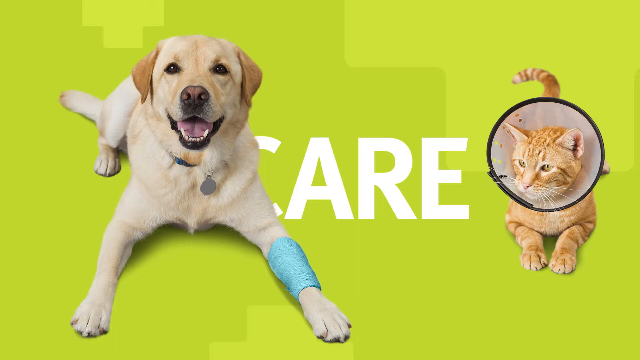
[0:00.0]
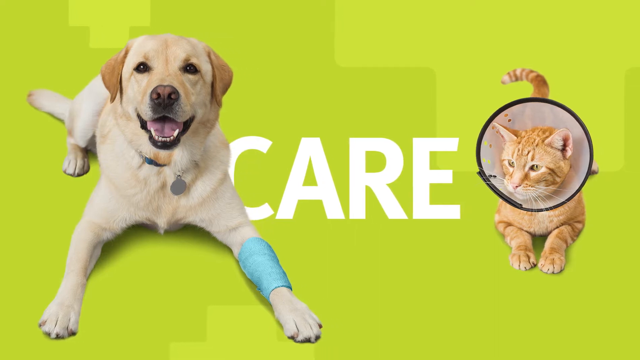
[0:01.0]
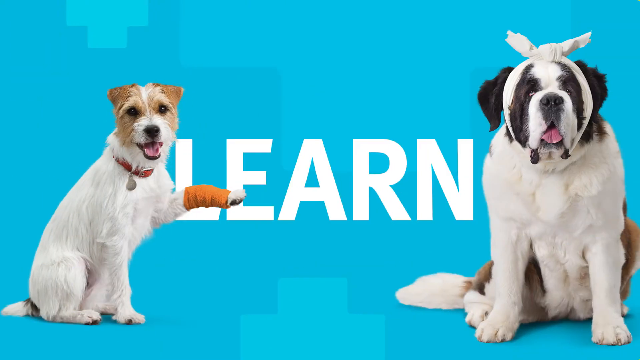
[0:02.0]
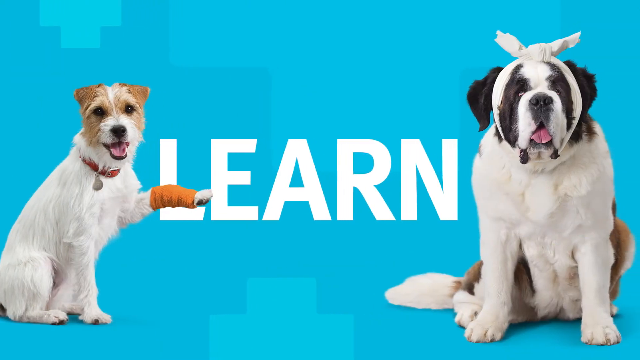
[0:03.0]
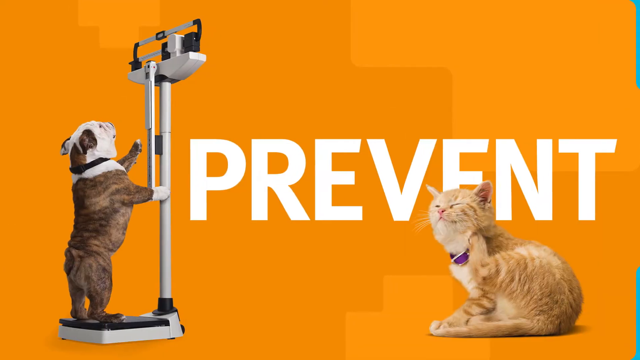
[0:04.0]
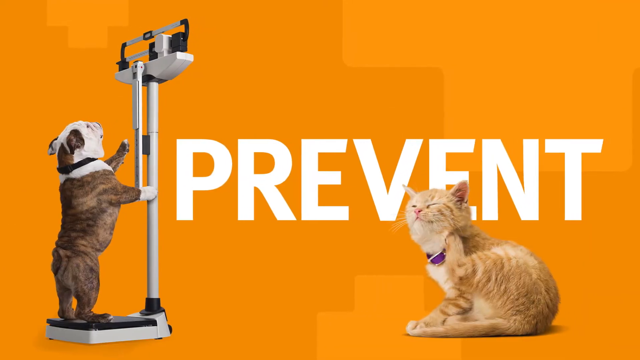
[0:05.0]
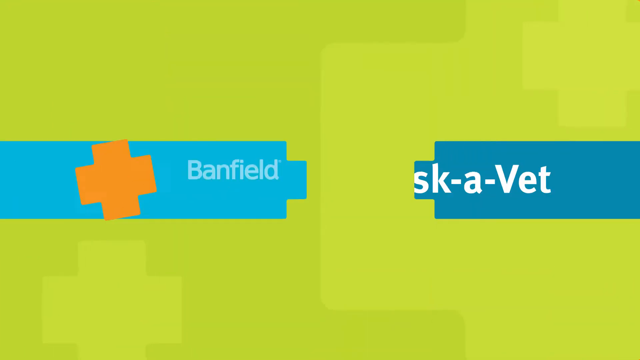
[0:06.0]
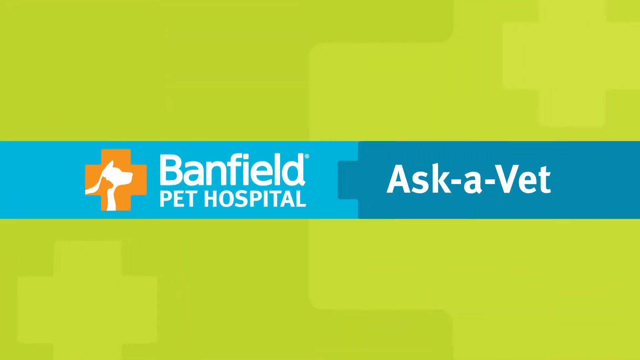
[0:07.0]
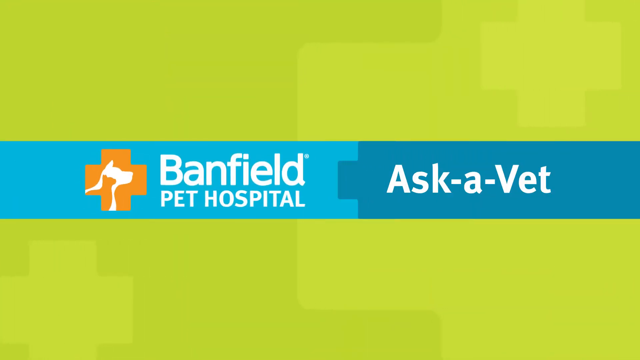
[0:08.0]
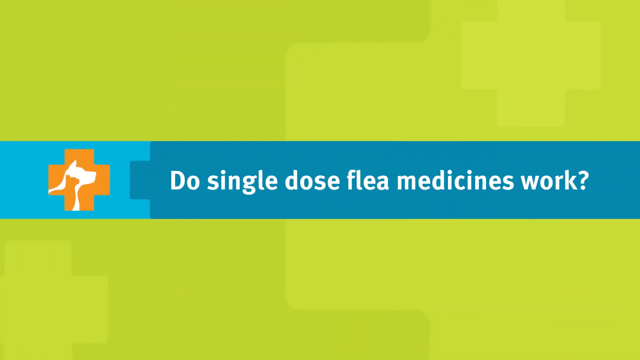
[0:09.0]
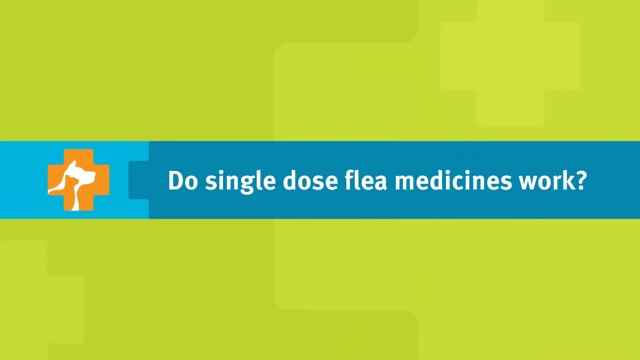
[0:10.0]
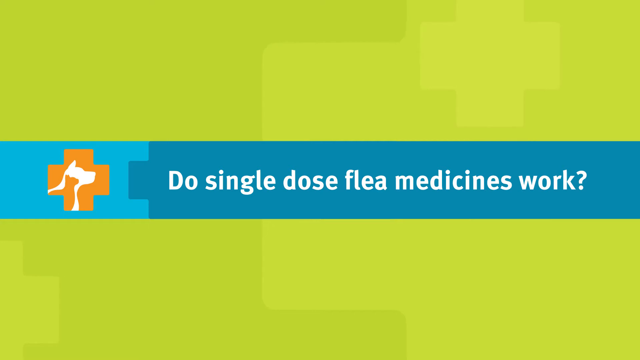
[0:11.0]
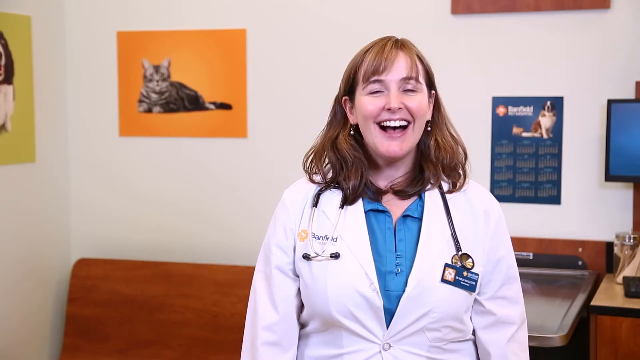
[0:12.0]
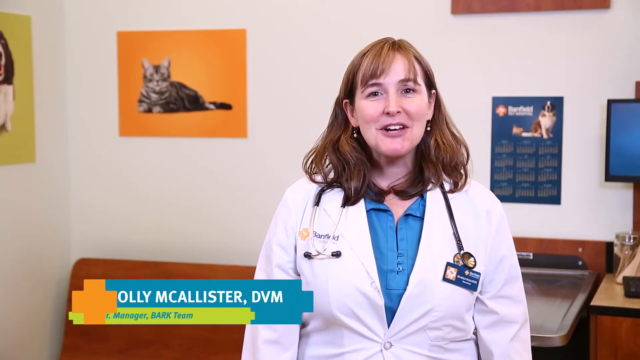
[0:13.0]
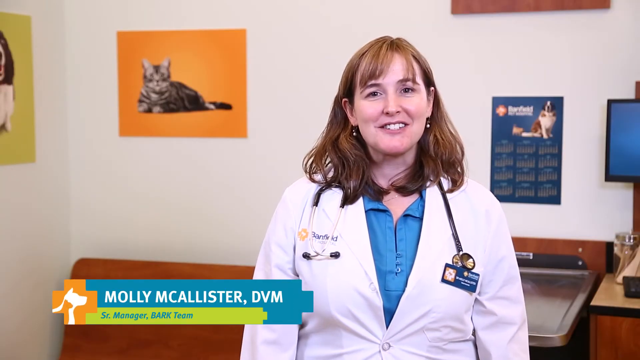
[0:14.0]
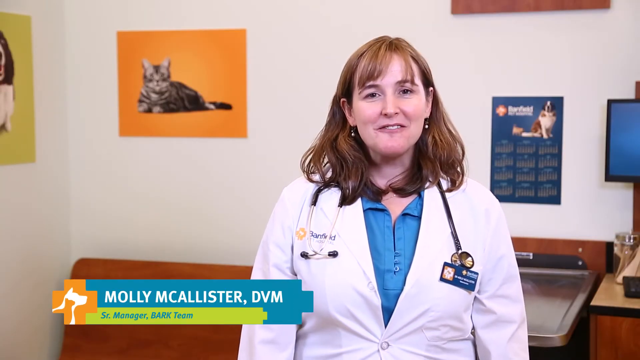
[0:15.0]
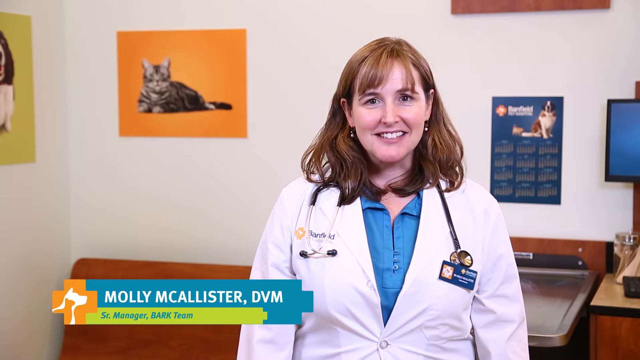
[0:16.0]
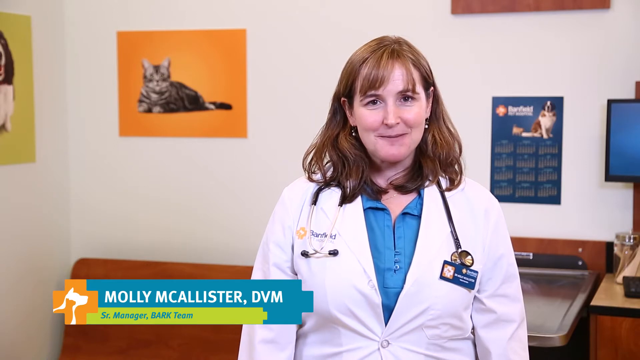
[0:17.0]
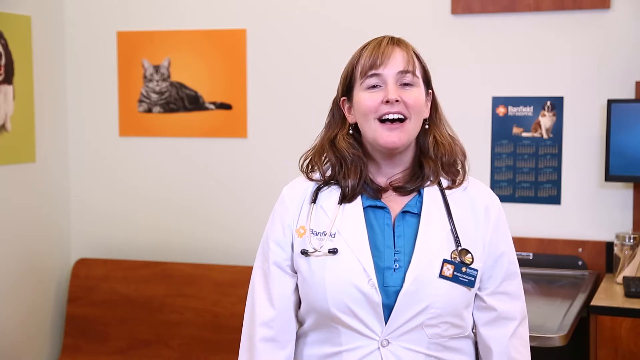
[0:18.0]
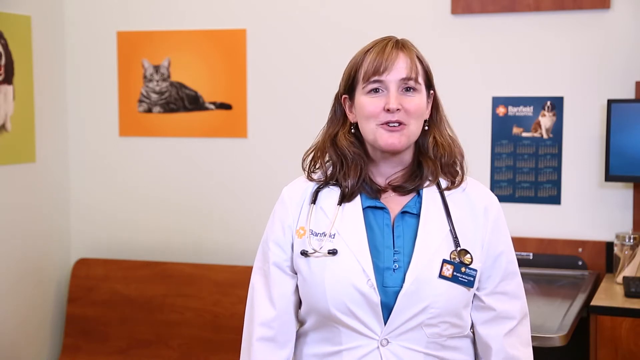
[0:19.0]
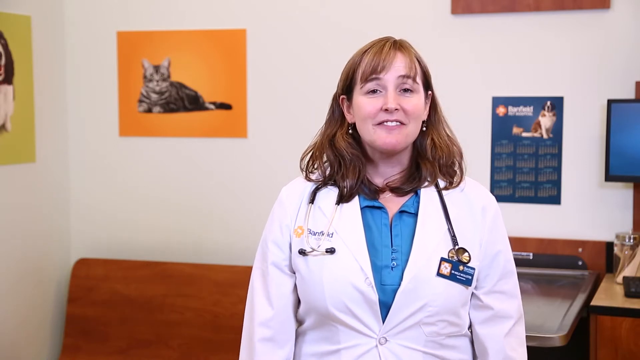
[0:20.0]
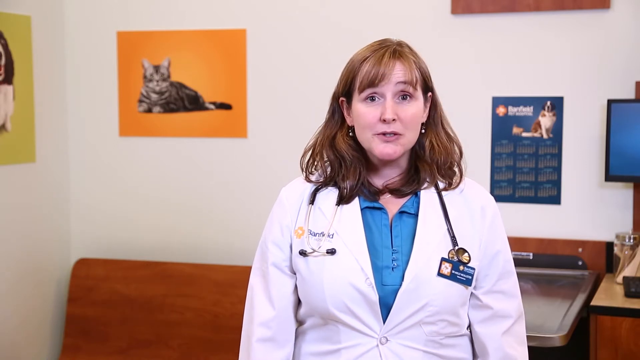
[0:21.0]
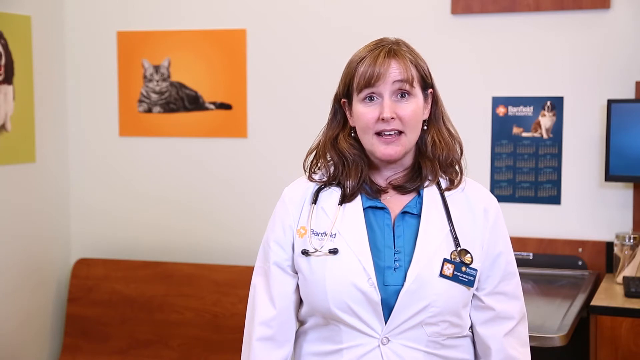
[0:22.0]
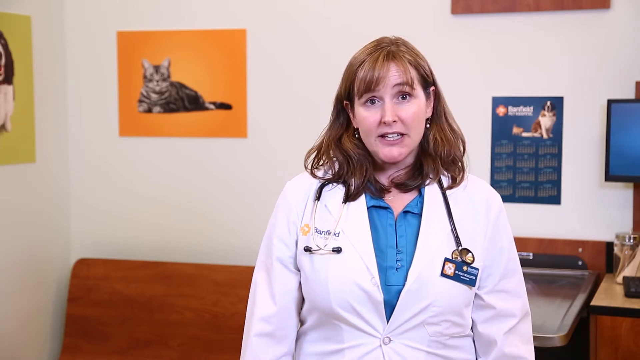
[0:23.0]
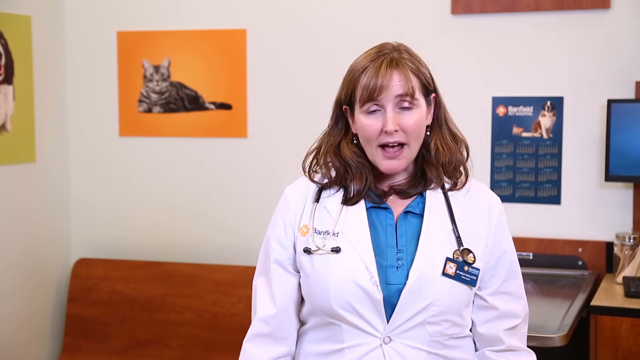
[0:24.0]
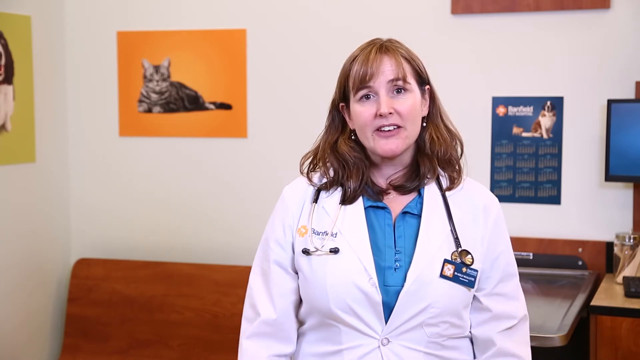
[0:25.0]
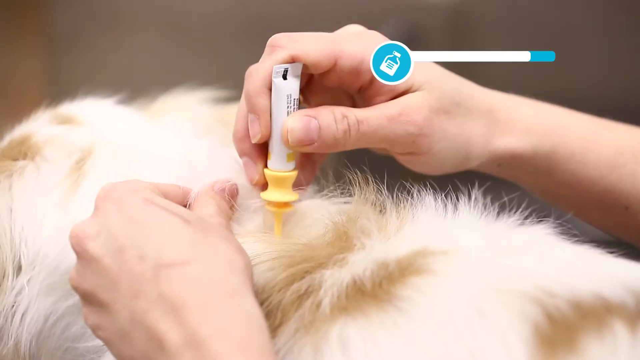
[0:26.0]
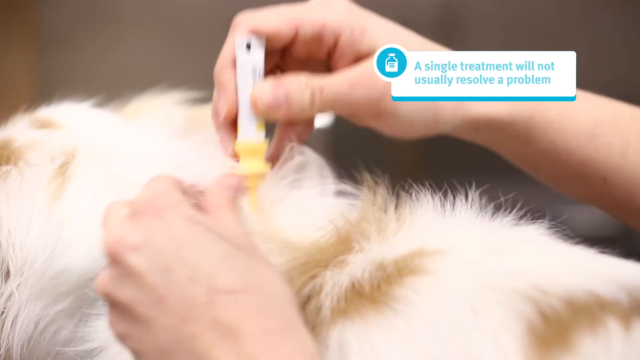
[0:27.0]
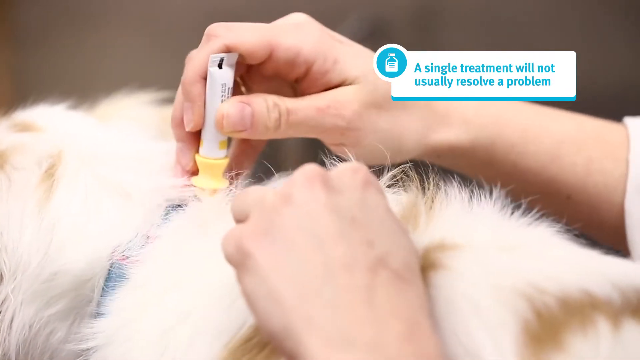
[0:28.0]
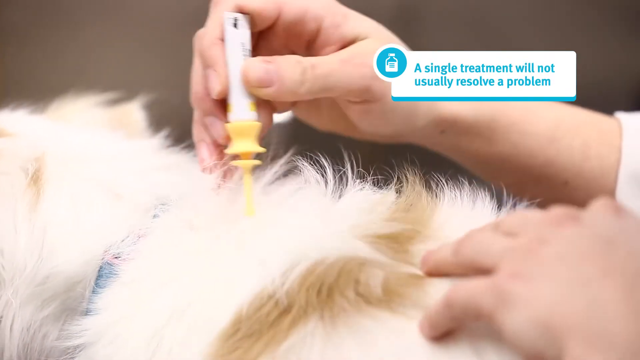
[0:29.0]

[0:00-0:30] A dog and a cat appear on a green background. The dog, a large yellowish dog that appears to be maybe a golden lab, wears a collar with a metal dog tag and some sort of light blue medical wrap around its front left leg. The cat is an orange tabby wearing a cone protector around its head; the cone is white with a black border. The image then shifts to a blue background with a small white and brown dog, apparently some sort of terrier, wearing a red collar with a dog tag and an orange bandage around its paw, and a St. Bernard type dog with a bandage wrapped around its head as if it is injured. In the middle of the screen, on a blue background, white text says "learn." This shifts to an orange background that says "prevent" in white text, with a bulldog standing on a scale weighing itself and an orange cat with a purple collar. Next comes a graphic that says "Banfield Pet Hospital, ask a vet" in white text on a two-tone blue banner, with the Banfield logo: a medical plus sign or cross in orange with a white dog and an orange cat in it. A question then appears on the screen in white text: "do single dose flea medicines work?" The image shifts to a veterinarian, Molly McAllister, DPM, a vet for this company. She is sitting in a room wearing a stethoscope and a white lab coat, with a poster of a tabby cat on an orange background on the back wall and what looks like some sort of Banfield calendar behind her. She speaks to the camera. The scene then shifts to someone applying flea medication to the back of a white and brown dog, possibly onto the back of its neck. The application tube is white with a yellow nozzle, and the words "a single treatment will not usually resolve the problem" appear.